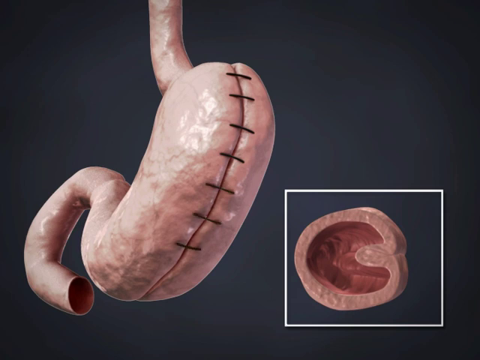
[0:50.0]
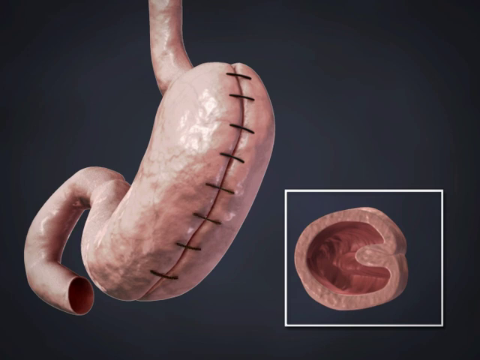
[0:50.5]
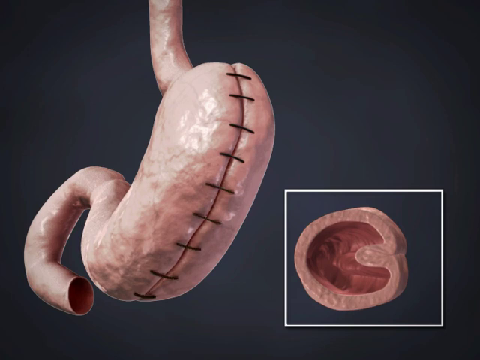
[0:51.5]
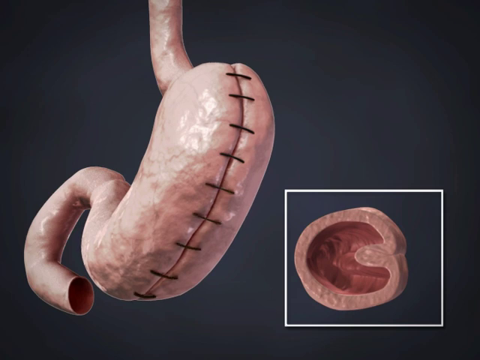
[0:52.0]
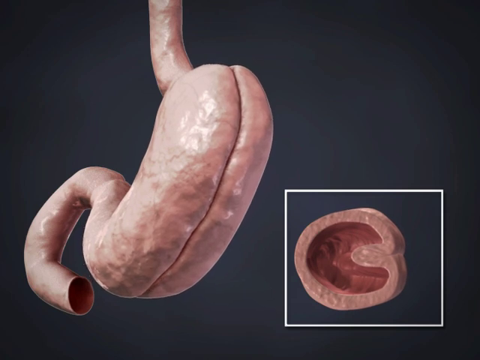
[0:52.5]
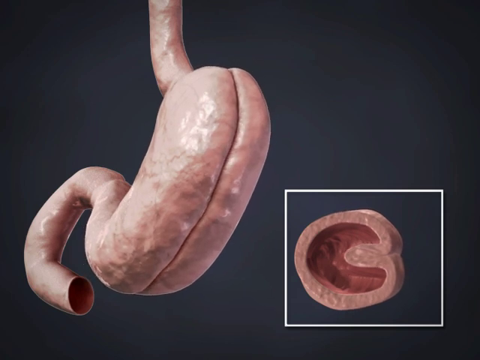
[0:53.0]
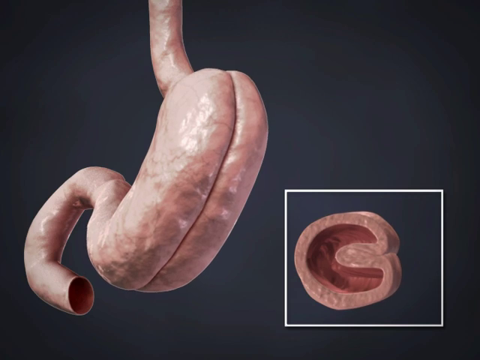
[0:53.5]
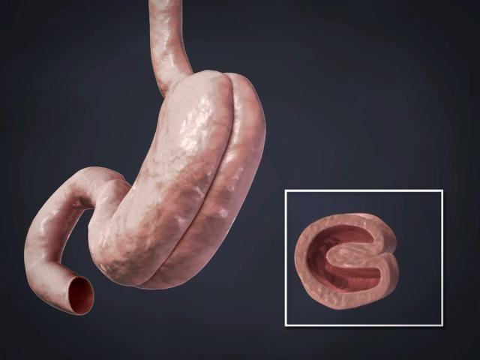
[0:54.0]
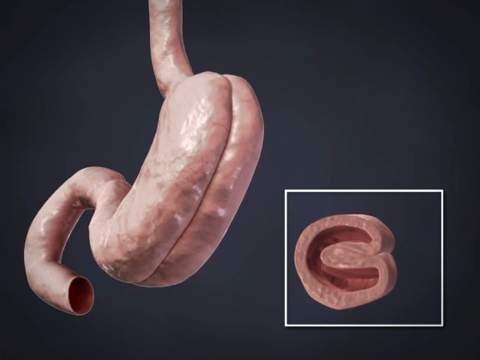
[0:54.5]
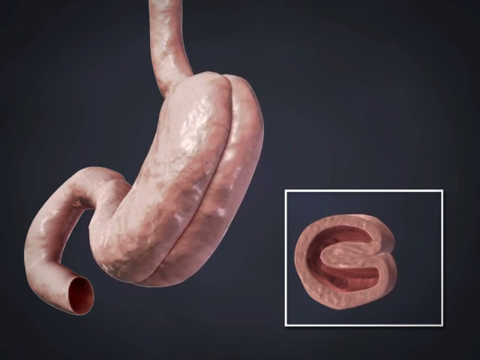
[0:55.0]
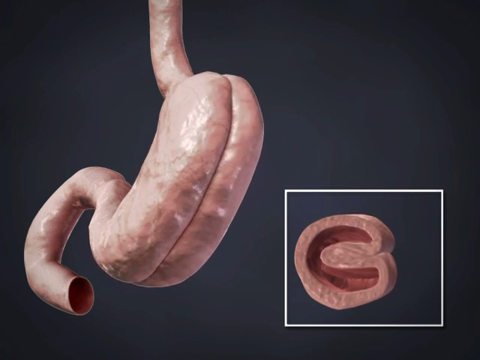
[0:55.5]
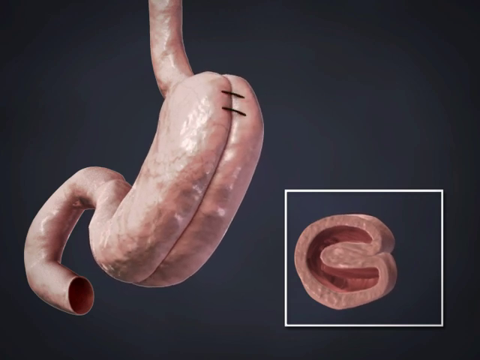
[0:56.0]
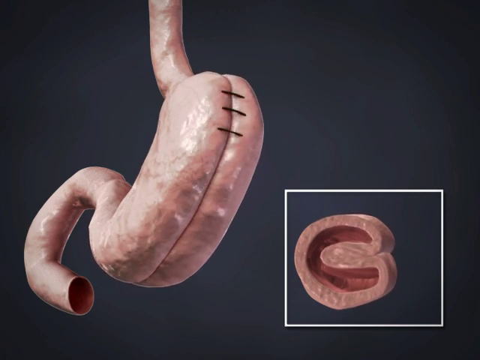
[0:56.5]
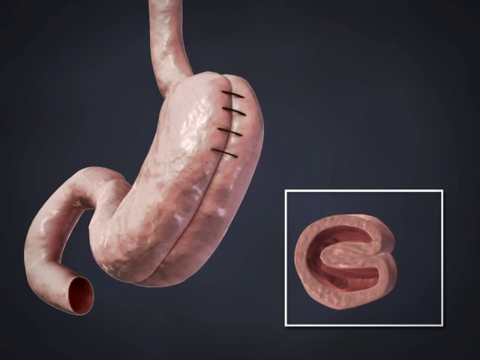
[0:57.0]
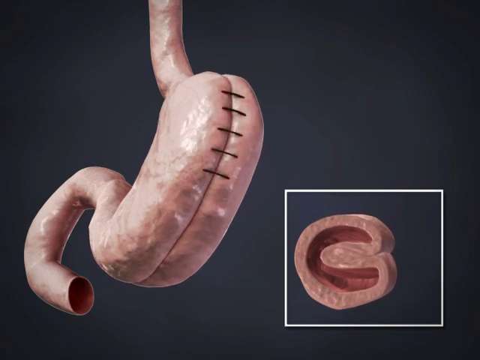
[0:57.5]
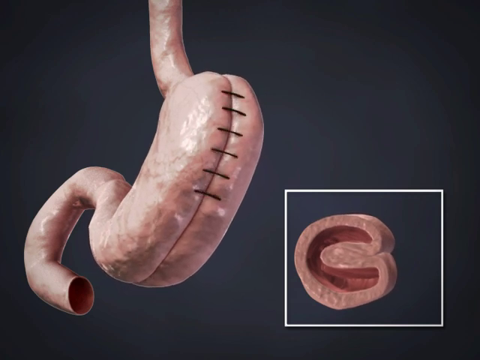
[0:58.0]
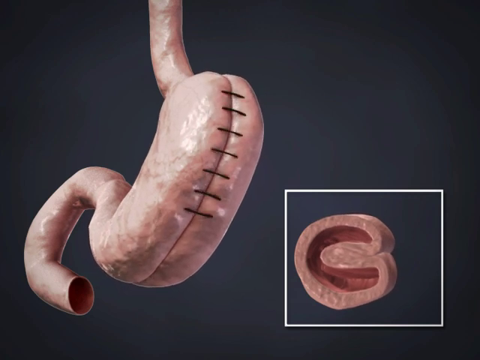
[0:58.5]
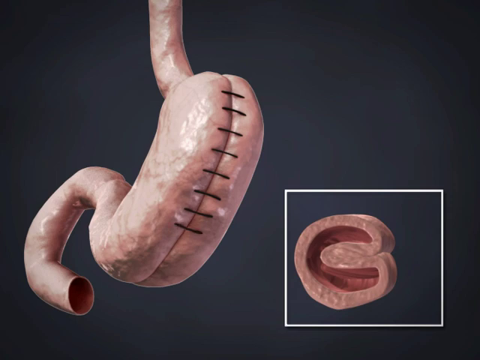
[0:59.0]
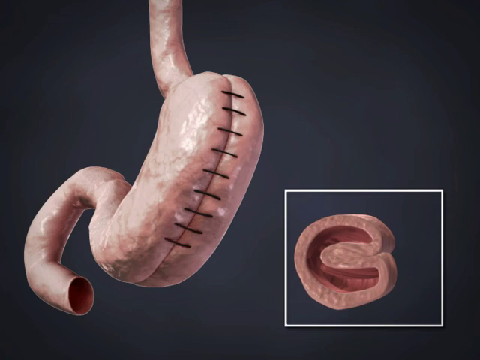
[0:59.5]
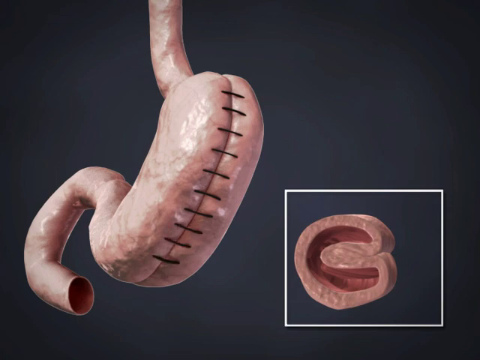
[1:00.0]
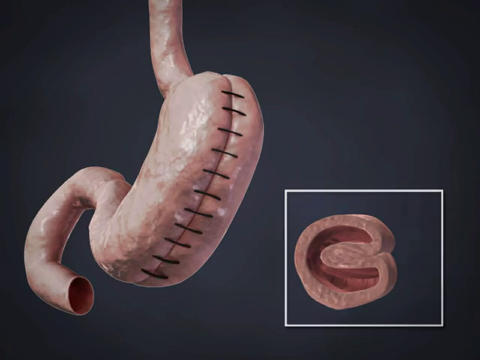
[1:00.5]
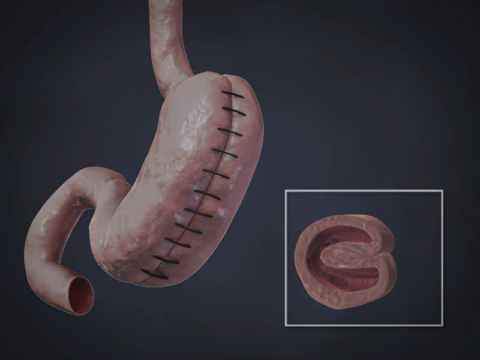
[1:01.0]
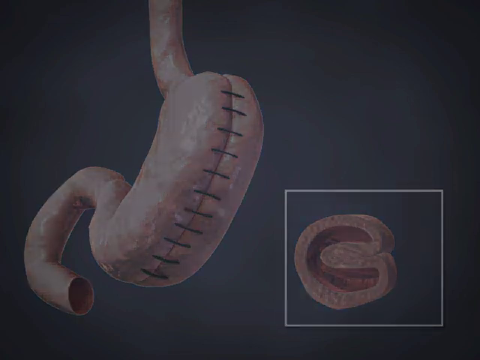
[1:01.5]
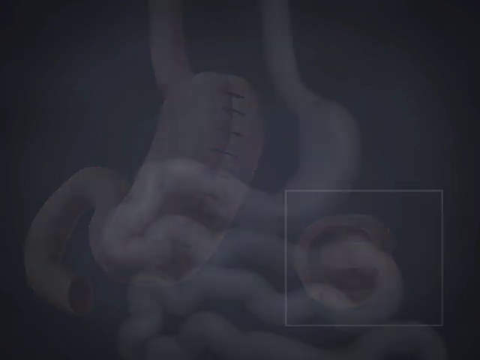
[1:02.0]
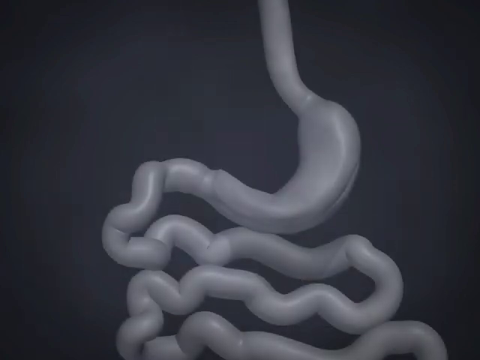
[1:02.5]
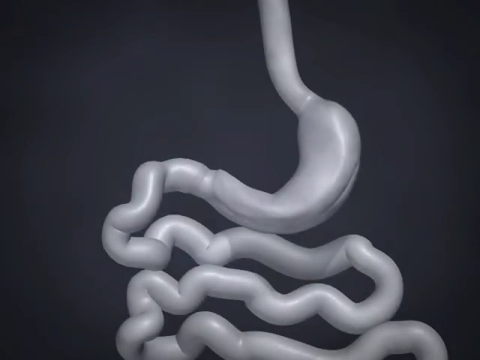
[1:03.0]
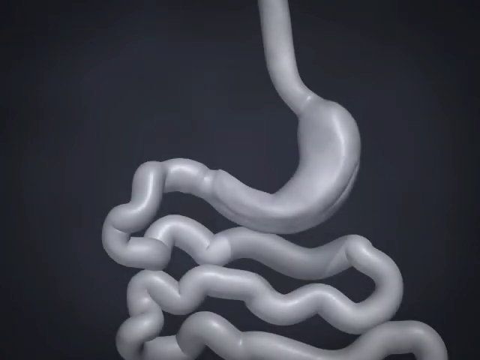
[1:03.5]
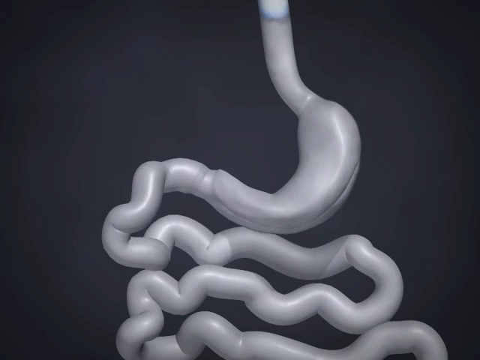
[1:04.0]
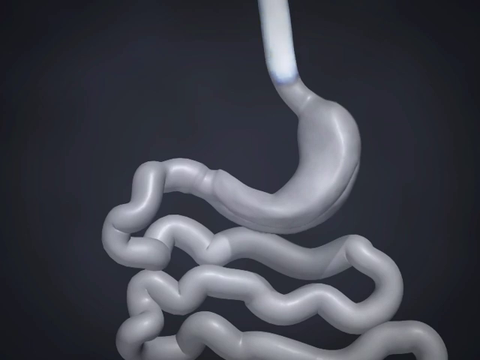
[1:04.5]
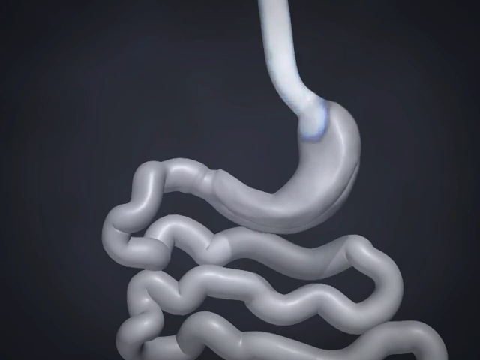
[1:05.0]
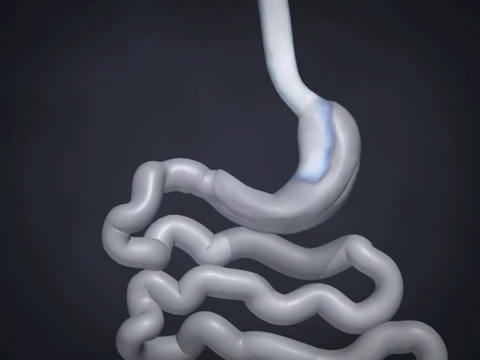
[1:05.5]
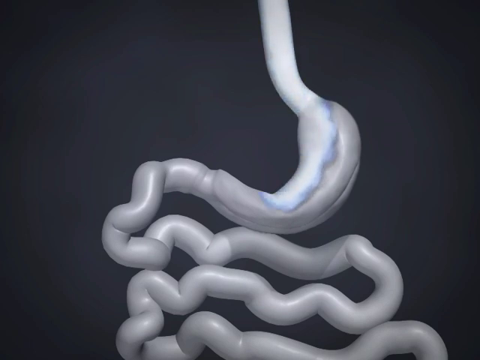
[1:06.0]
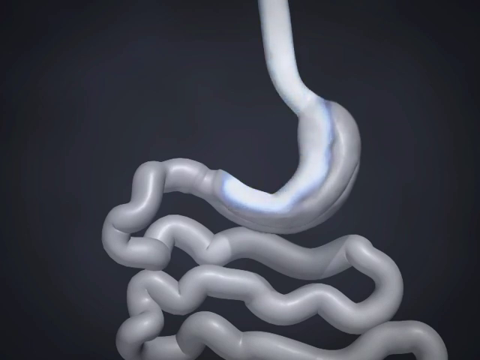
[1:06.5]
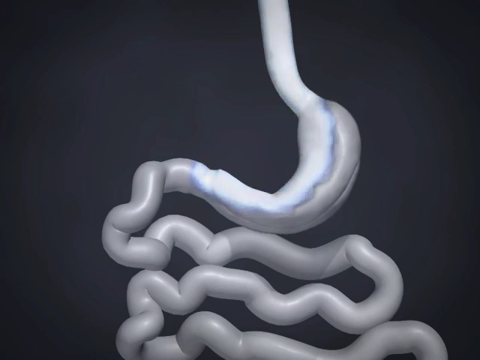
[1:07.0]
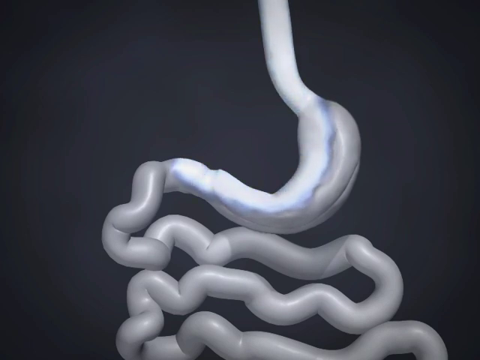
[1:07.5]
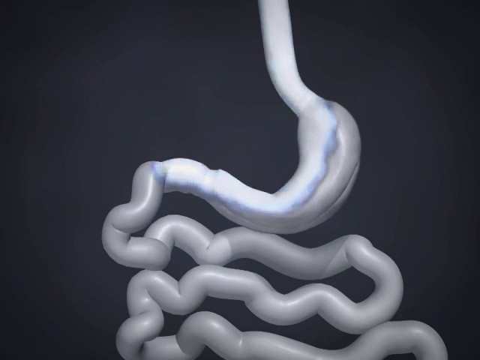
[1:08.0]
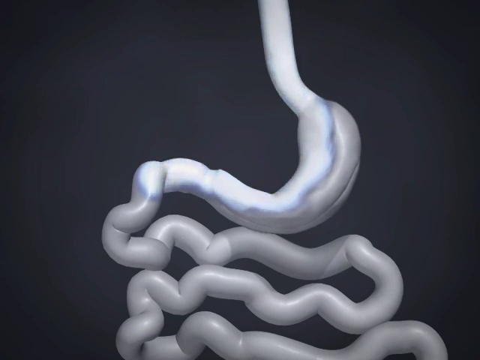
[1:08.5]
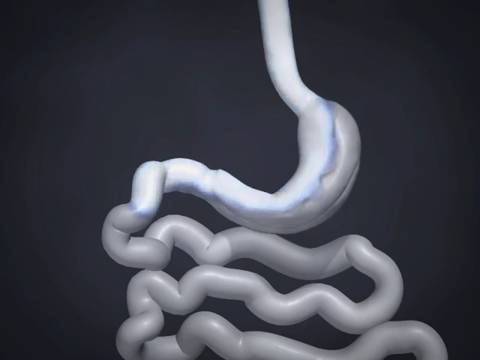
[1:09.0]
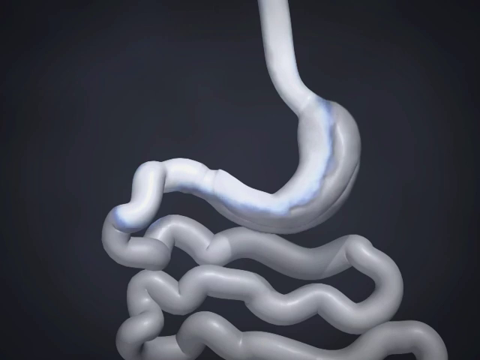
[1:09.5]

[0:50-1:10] An animation apparently shows a human stomach, with the esophagus at the top and, on the lower left side of the screen, the lower part of the tube, possibly the intestines. The stomach appears to be cut in half surgically and stitched together, with what seem to be ten stitches. The lower right-hand corner shows an animation of the result: the stomach being folded on top of itself, apparently to reduce its size.